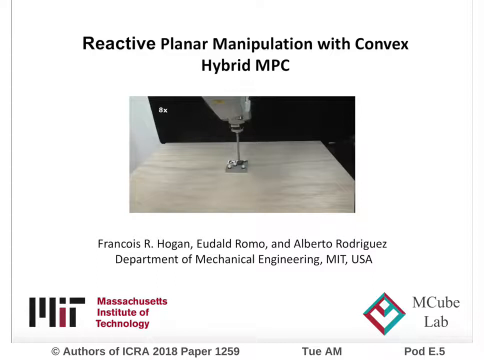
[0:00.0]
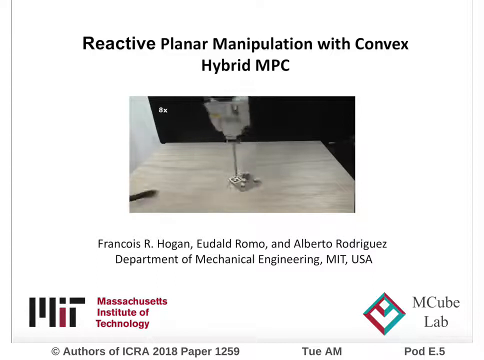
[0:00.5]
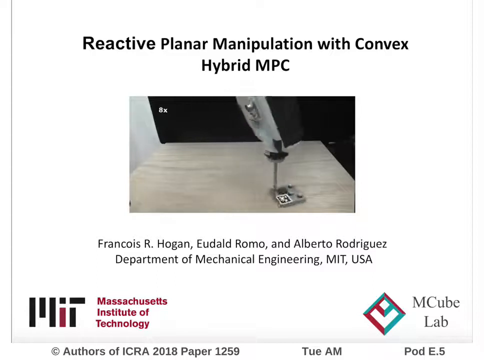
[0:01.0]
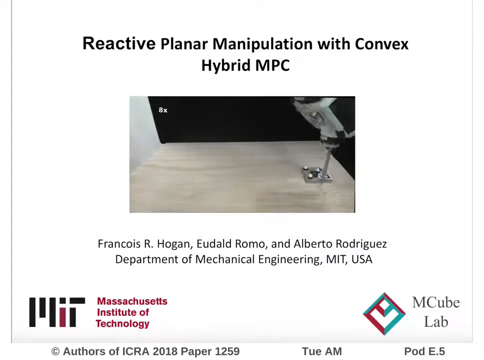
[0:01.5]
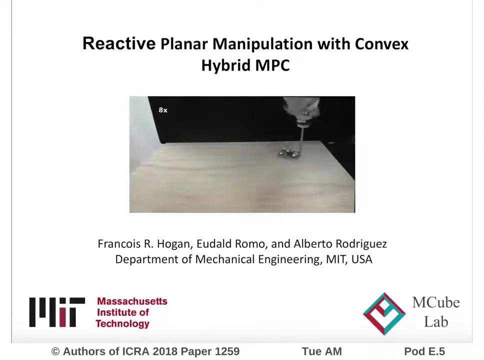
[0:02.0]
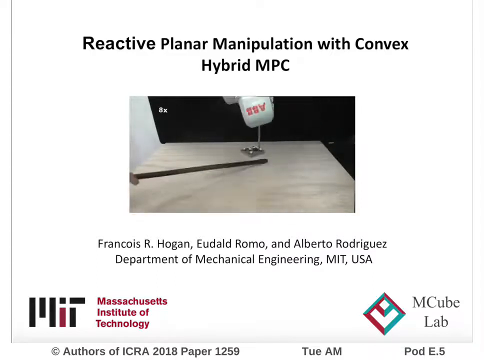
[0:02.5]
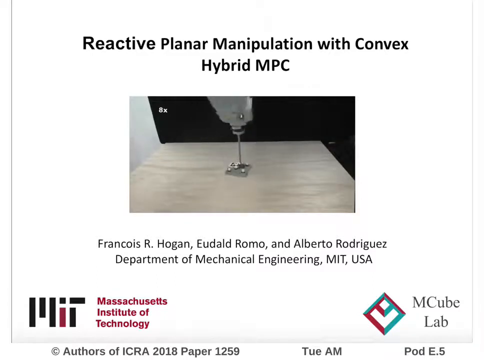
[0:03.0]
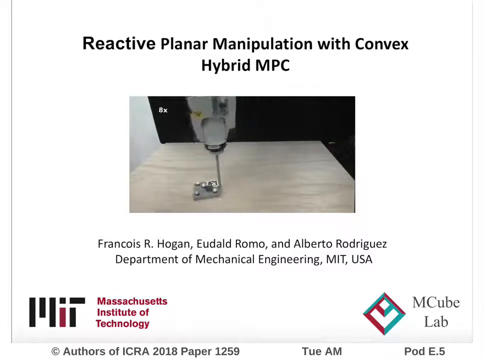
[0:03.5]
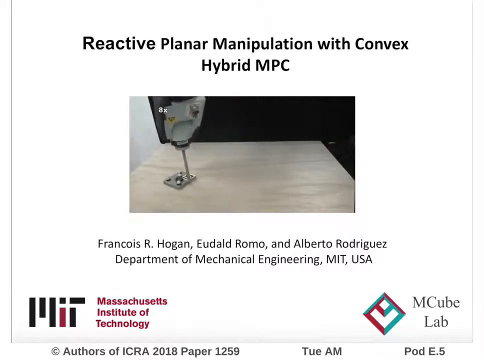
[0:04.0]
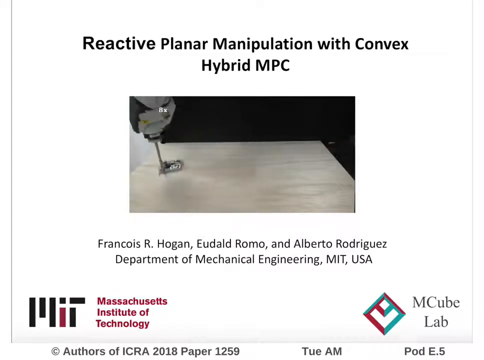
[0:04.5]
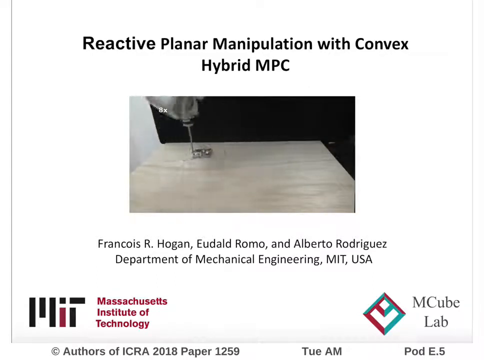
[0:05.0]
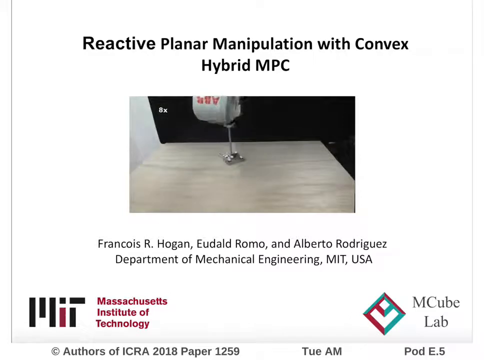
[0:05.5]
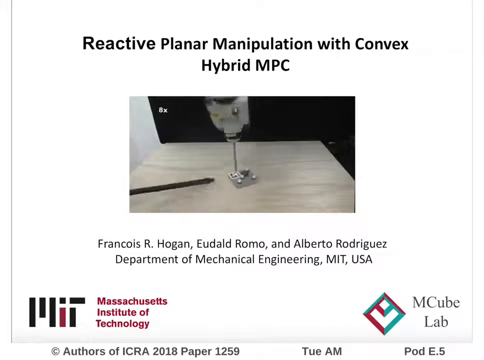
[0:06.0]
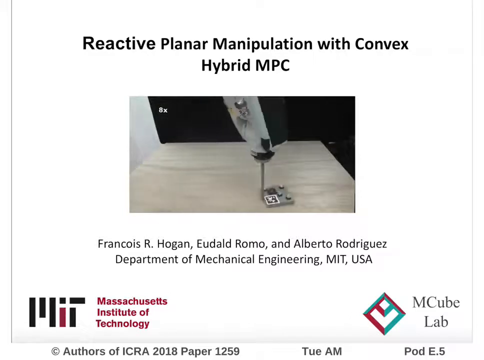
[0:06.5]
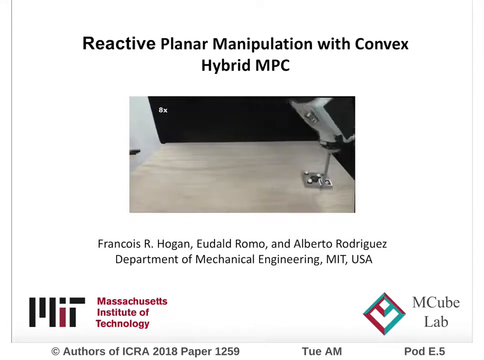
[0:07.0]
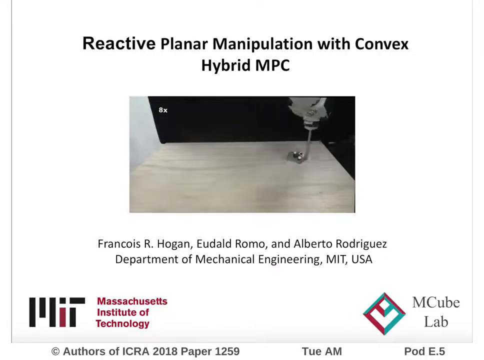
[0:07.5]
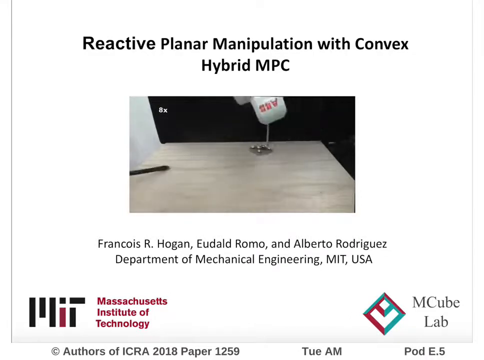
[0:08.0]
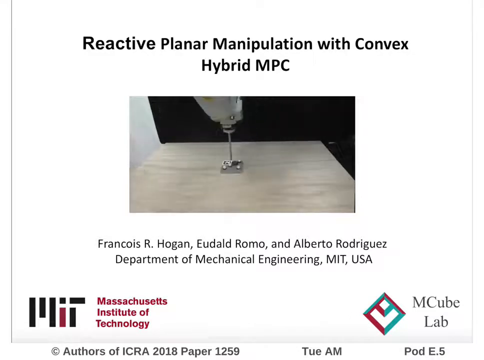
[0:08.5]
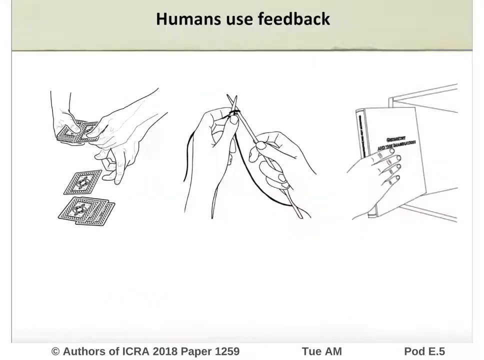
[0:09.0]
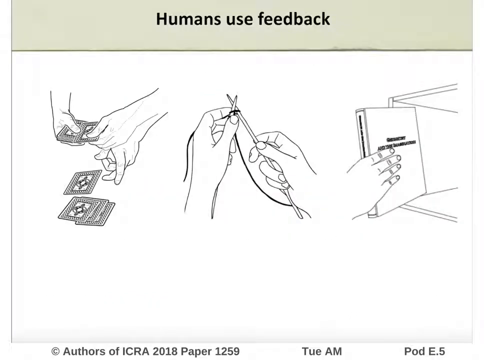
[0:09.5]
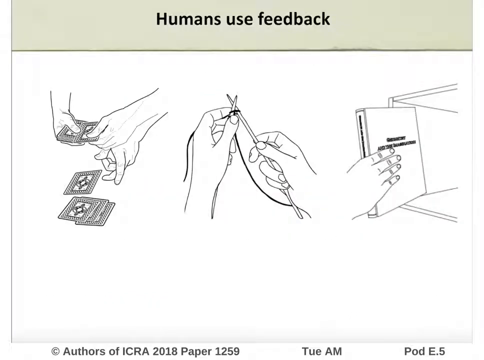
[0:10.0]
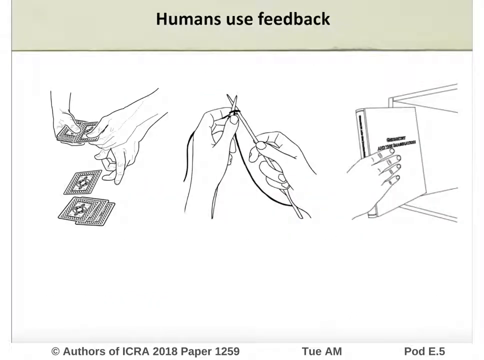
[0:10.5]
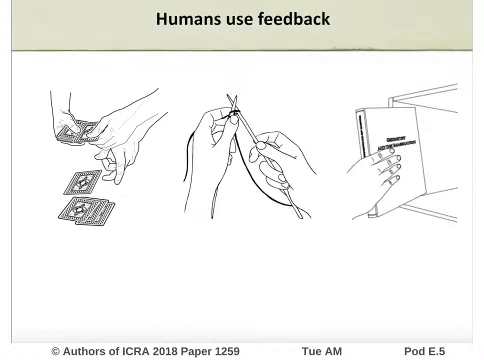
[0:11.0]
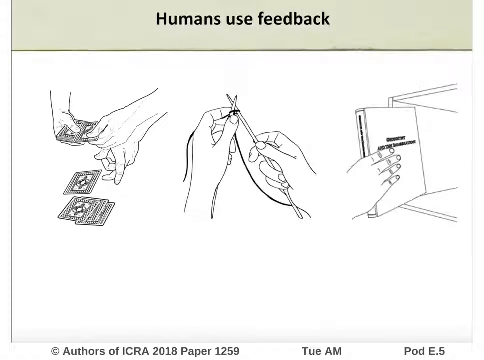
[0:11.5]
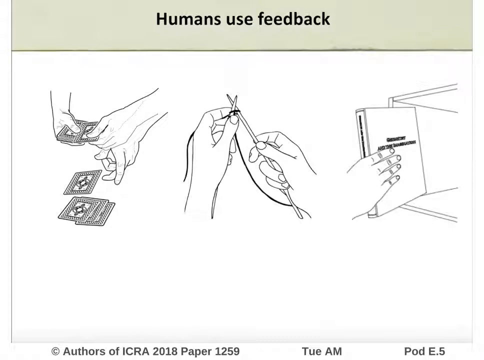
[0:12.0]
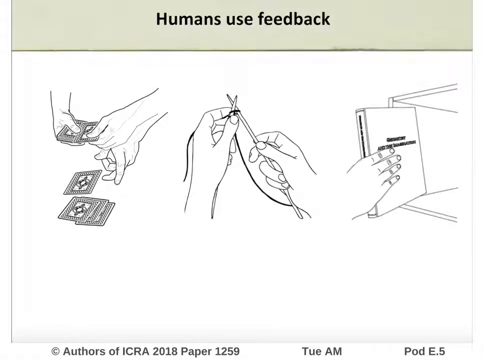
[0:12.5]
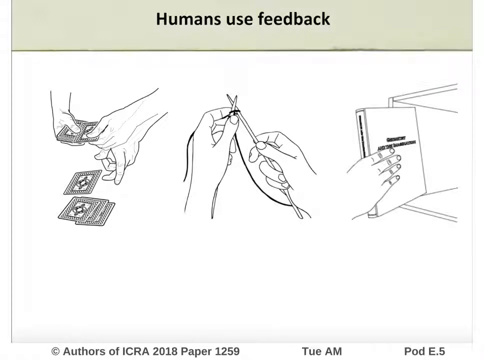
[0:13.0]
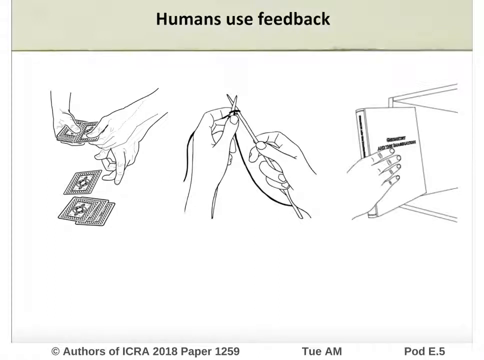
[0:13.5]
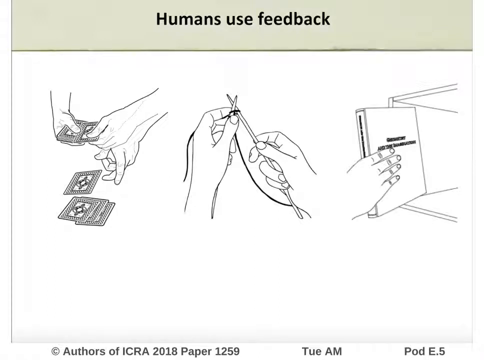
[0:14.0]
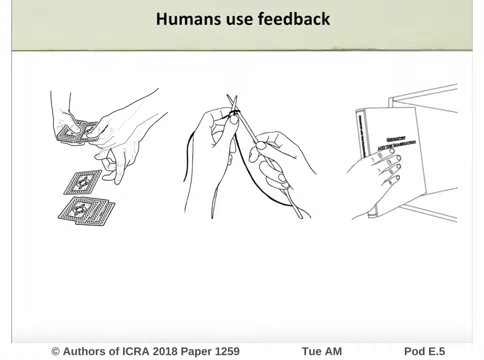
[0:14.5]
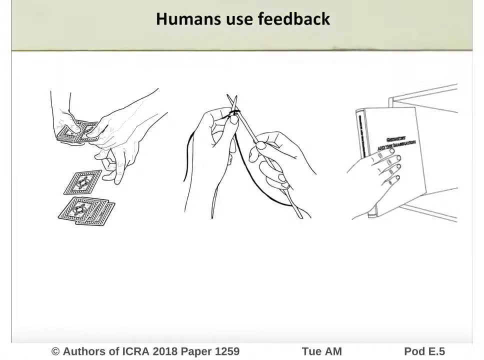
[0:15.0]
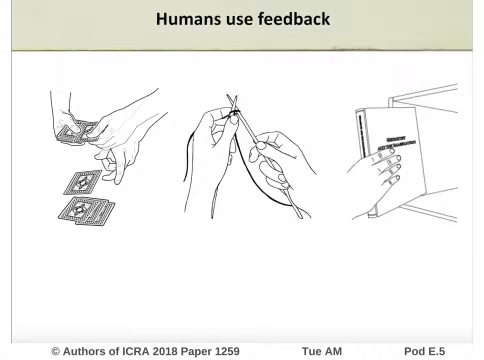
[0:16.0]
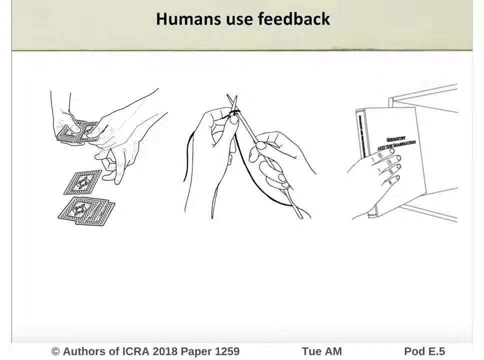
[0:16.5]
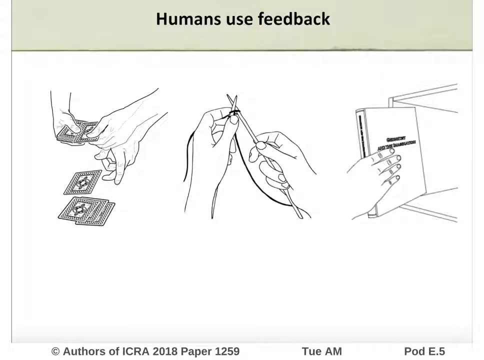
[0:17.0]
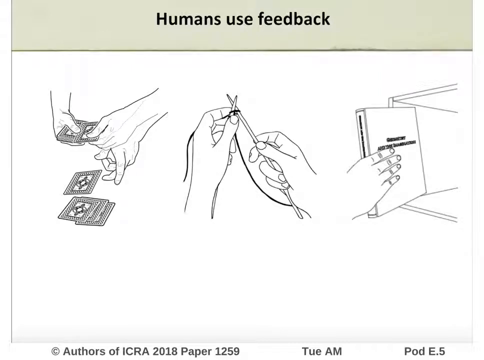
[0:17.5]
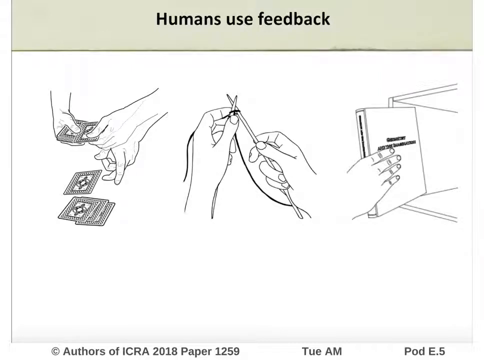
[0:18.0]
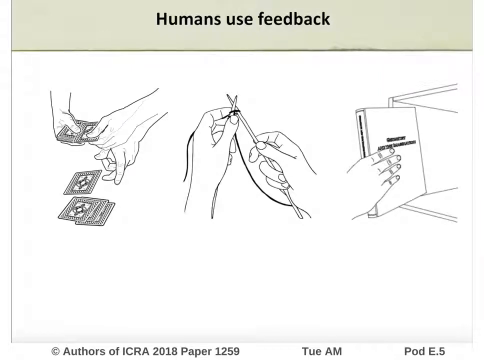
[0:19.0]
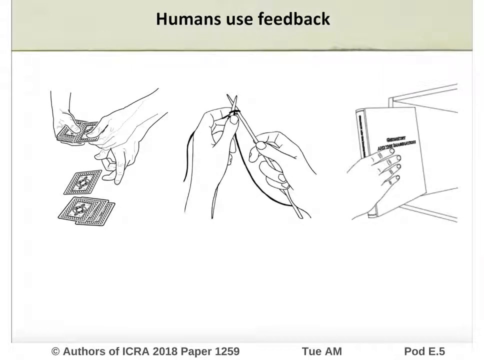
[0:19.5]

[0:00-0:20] The video presents reactive planar manipulation with convex hybrid MPC, from the Massachusetts Institute of Technology, with three people credited. Something pushes a square metal piece around while, at the same time, someone apparently reaches over trying to get it; it is almost like the pusher is protecting the piece in a game of keep away. Then the text "humans use feedback" appears, followed by images of someone dealing out cards, someone sewing, and someone either pulling out or putting in something shaped like a book.